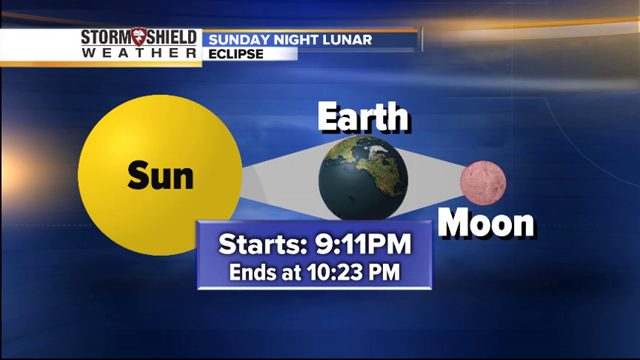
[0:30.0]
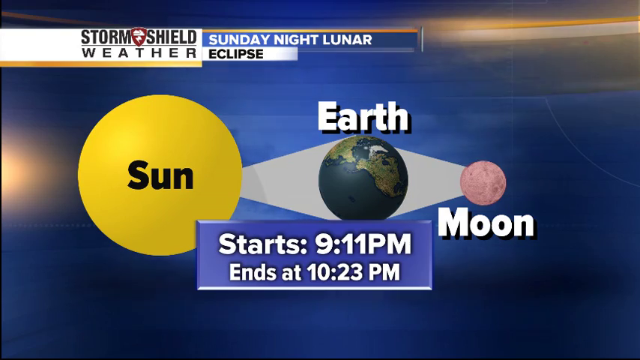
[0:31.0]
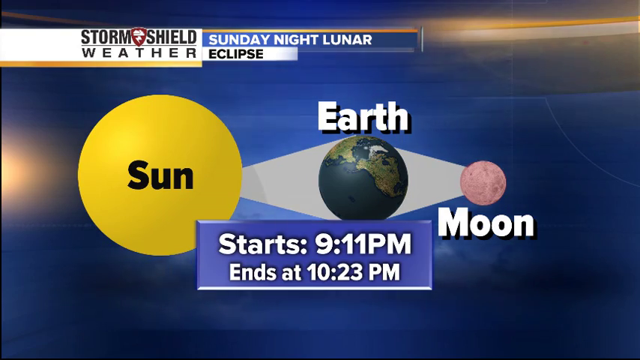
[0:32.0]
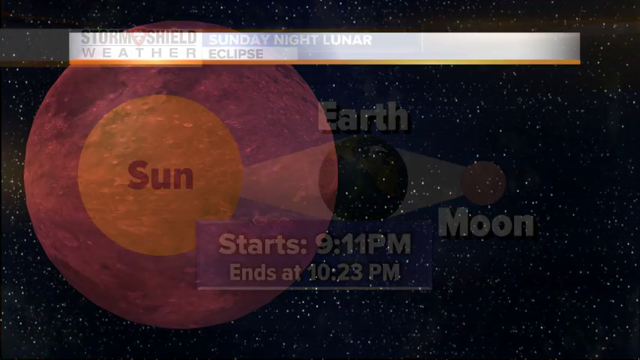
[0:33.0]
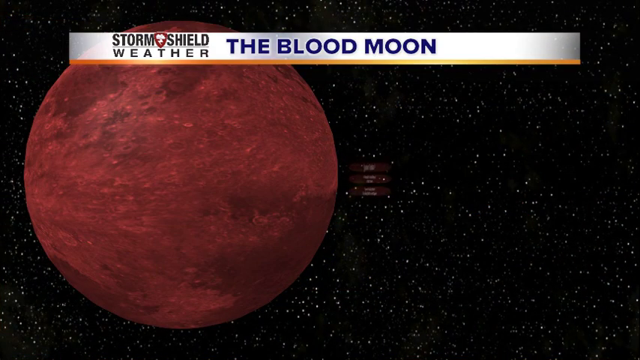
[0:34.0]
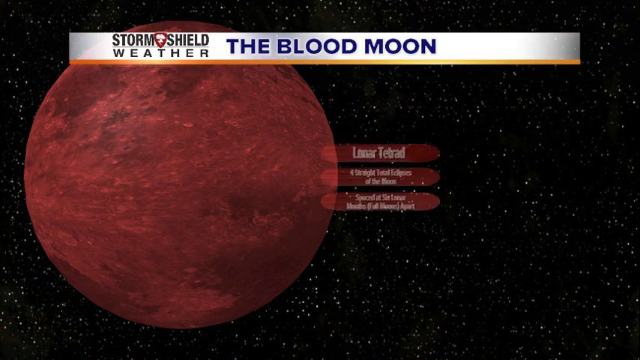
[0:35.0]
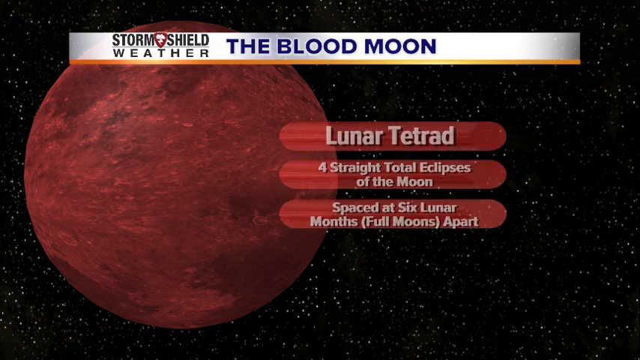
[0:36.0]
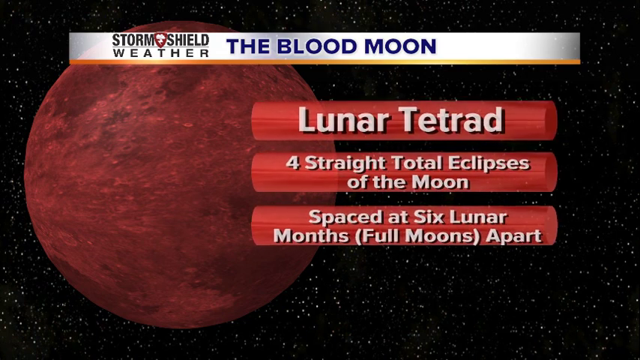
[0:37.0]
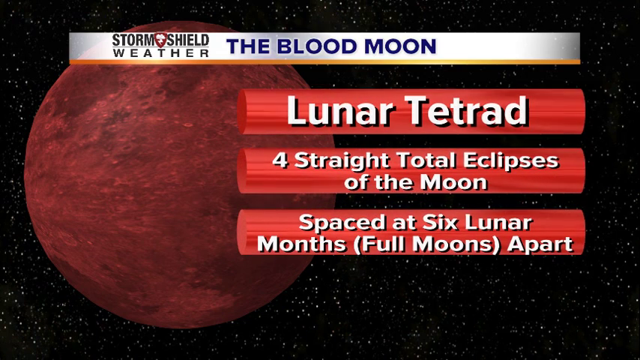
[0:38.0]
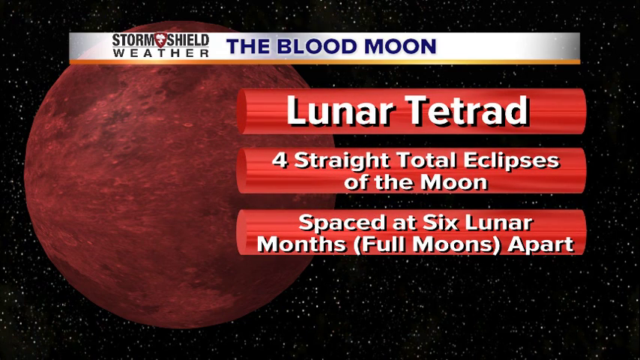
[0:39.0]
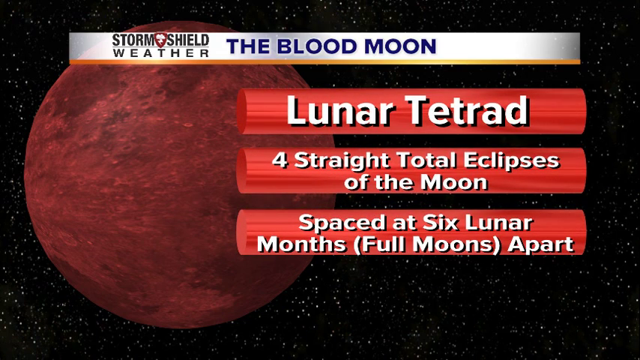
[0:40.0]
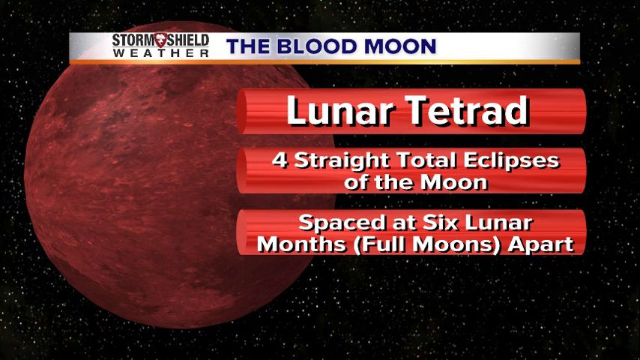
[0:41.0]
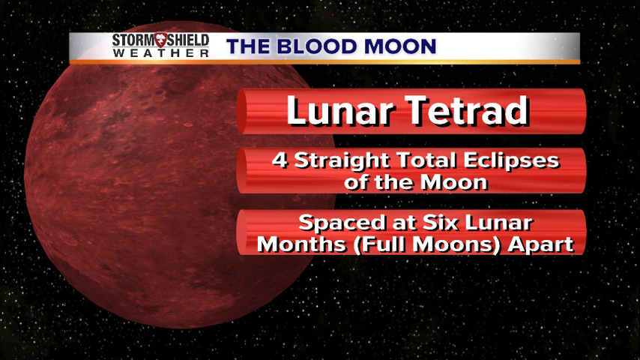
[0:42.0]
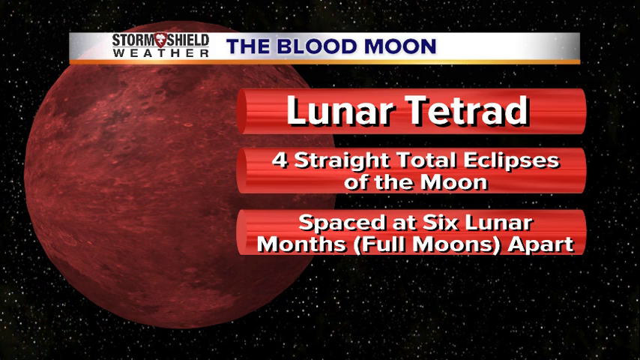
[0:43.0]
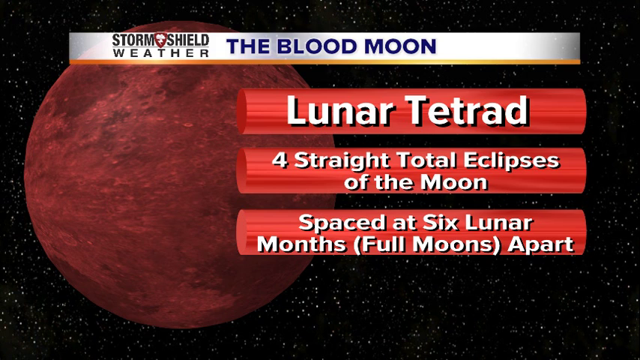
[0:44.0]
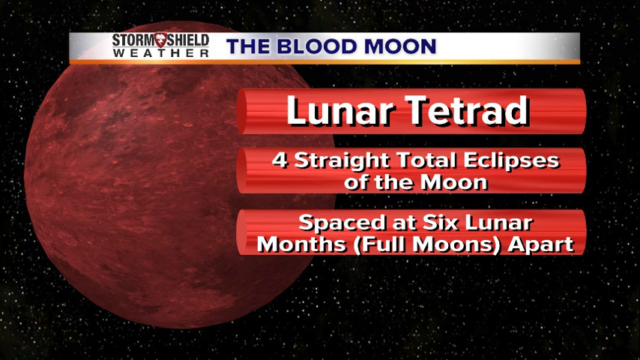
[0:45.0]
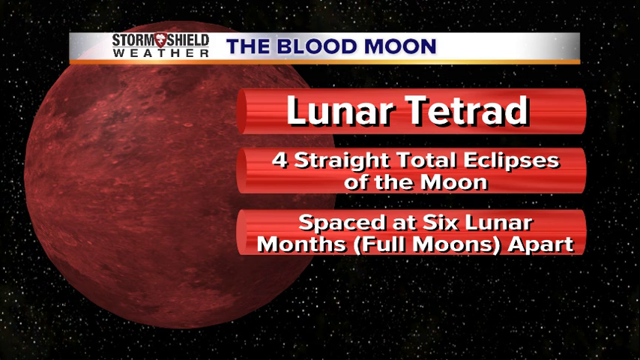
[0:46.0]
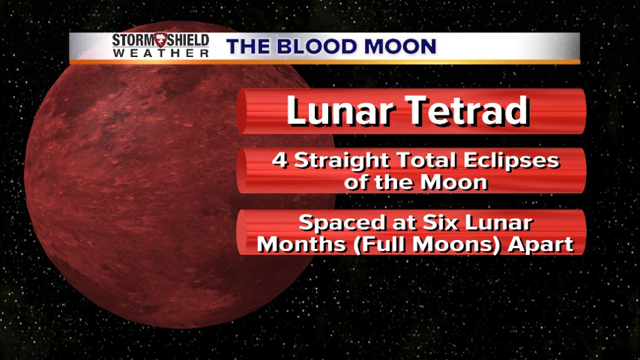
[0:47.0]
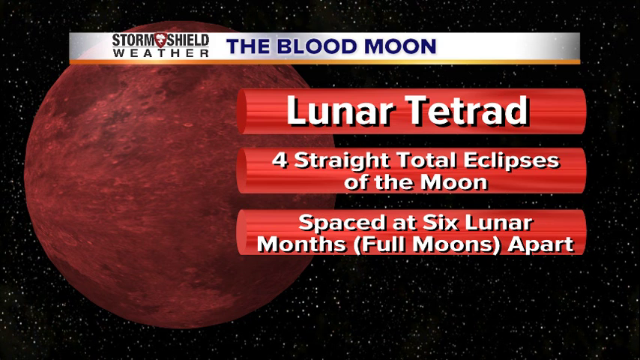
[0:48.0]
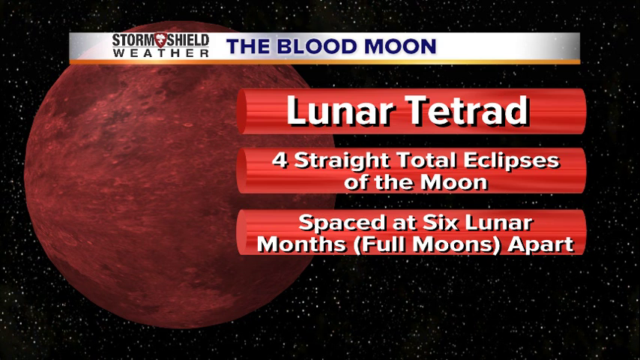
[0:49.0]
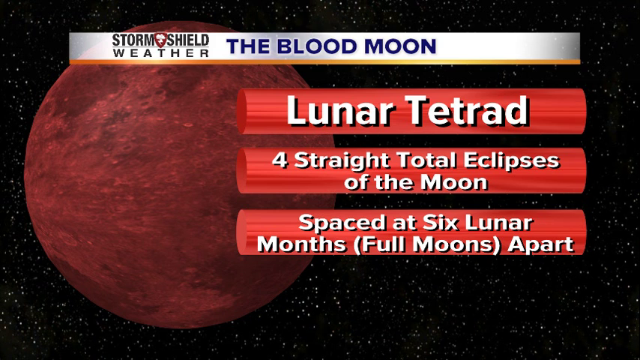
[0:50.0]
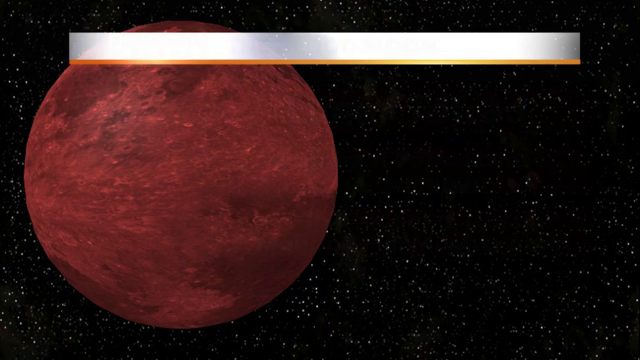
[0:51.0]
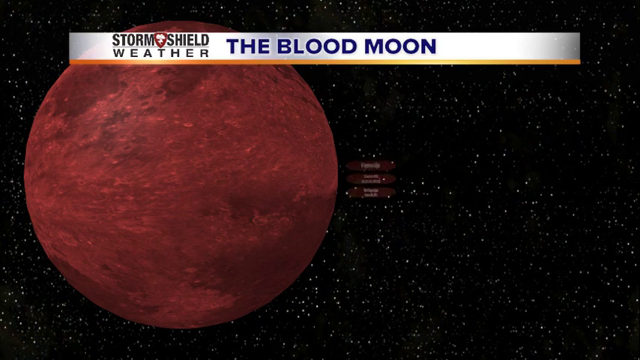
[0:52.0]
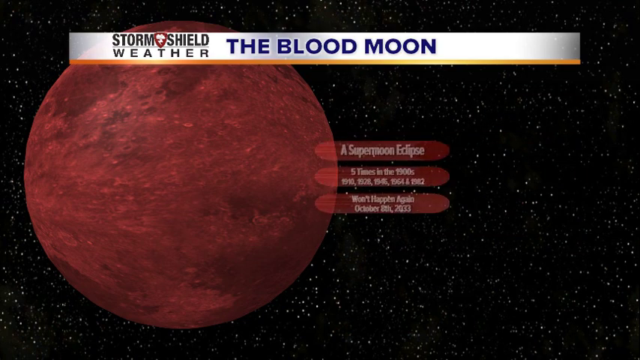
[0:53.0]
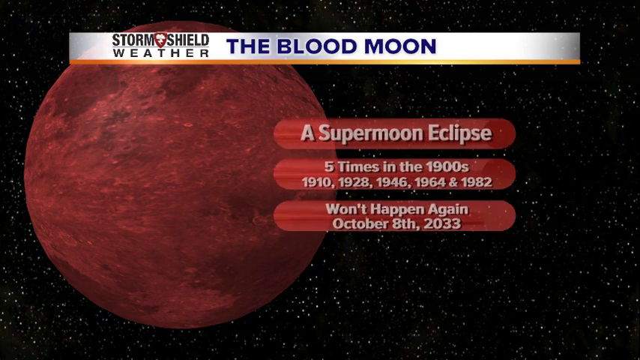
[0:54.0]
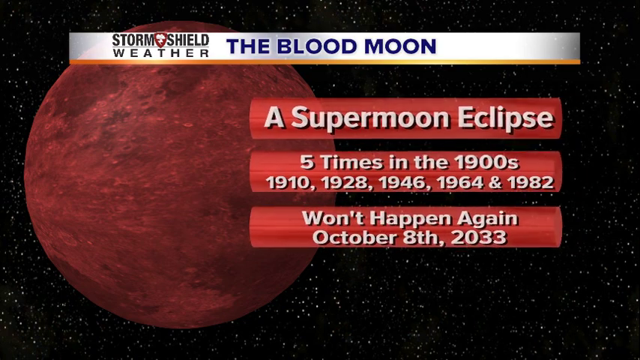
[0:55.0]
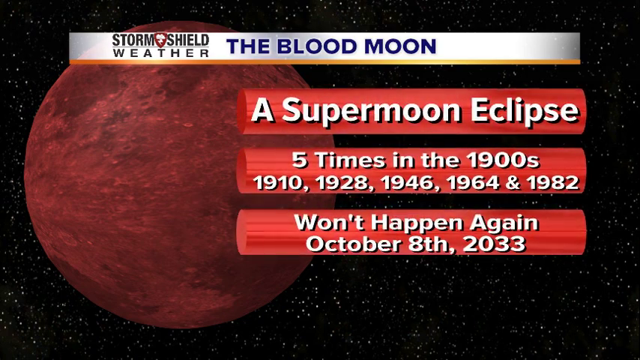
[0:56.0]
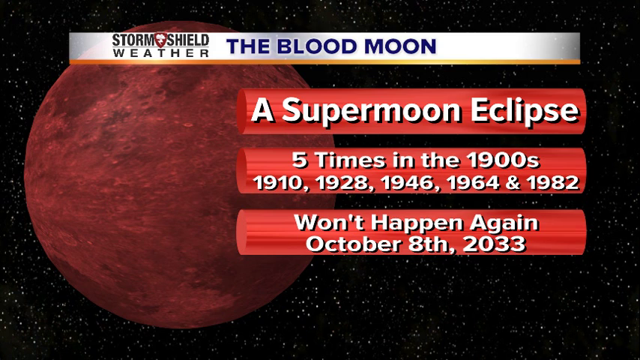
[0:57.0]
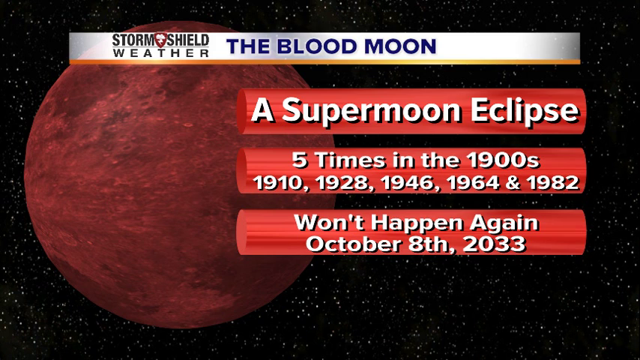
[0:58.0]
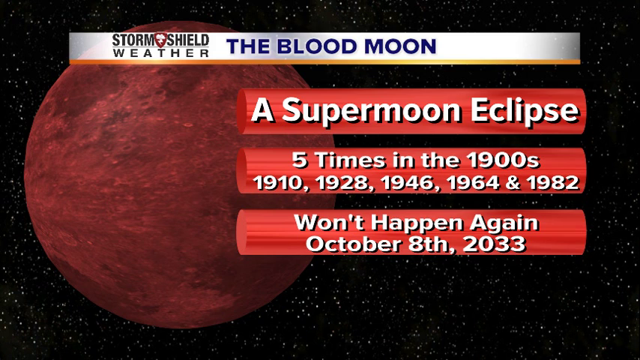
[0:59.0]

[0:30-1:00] A banner indicates this is from Storm Shield Weather, and the topic is the Sunday night lunar eclipse. The background is blue, with the left part a darker blue containing a nondescript, sort of yellow fuzzy light. A yellow circle is labeled "sun" on the inside. Next to that, in the center, is "earth", and below that is a blue globe with light green landmass. To the right is a very small pink circle with some textures on it, and below it the text says "moon". The display indicates "starts 9:11 p.m. ends at 10:23 p.m." The view then changes to the blood moon: a black background with lots of white speckles and a very large reddish pink circle with very textured material on it. Text reads "lunar tetrad four straight total eclipses of the moon spaced at six lunar months full moons apart".